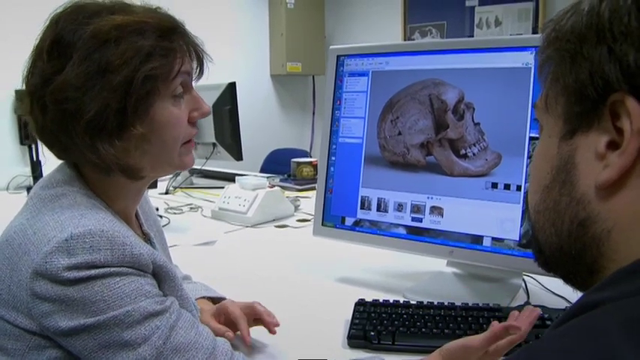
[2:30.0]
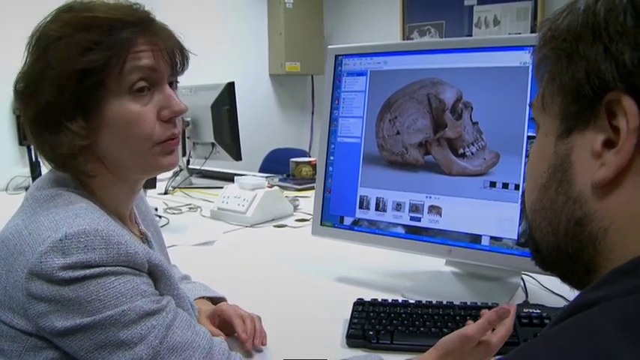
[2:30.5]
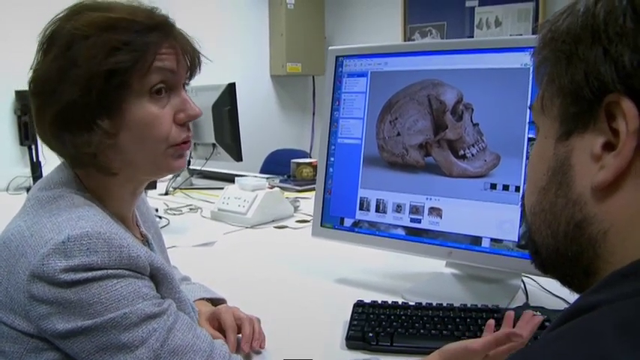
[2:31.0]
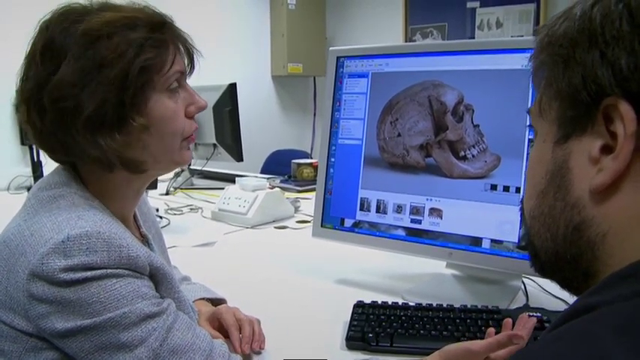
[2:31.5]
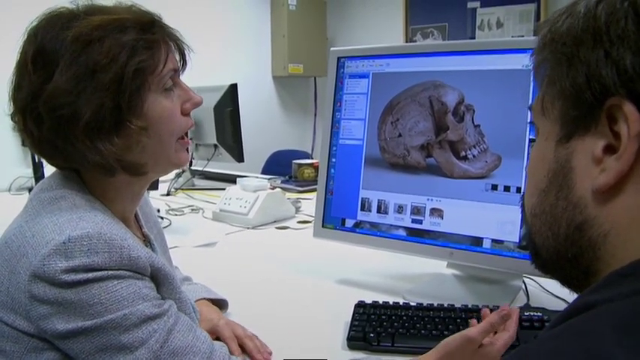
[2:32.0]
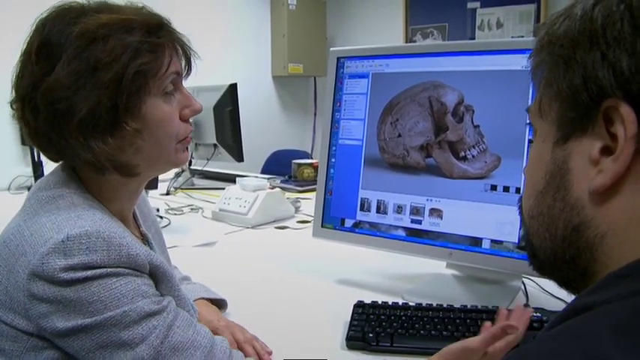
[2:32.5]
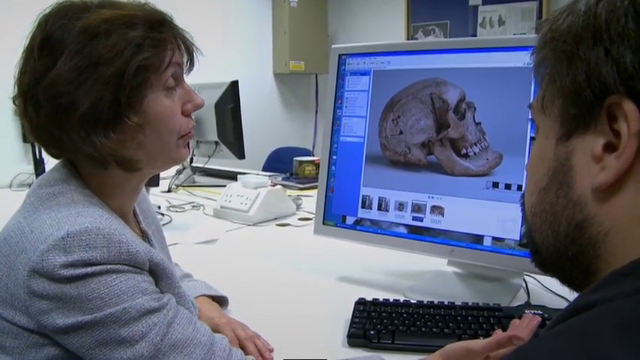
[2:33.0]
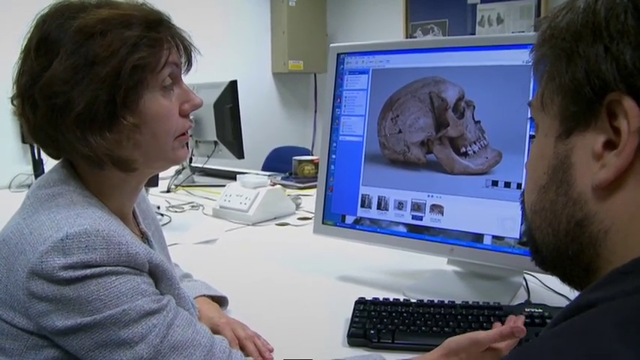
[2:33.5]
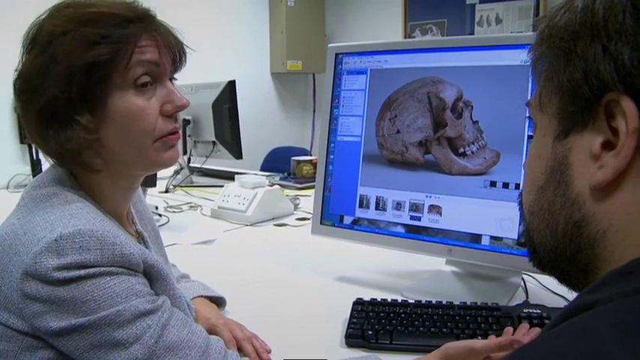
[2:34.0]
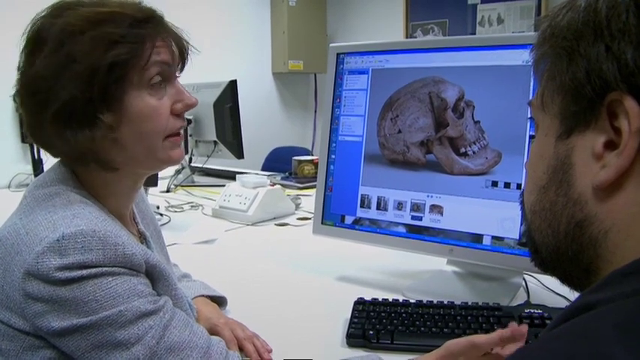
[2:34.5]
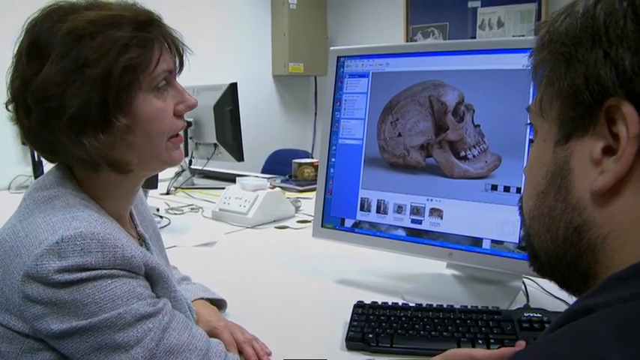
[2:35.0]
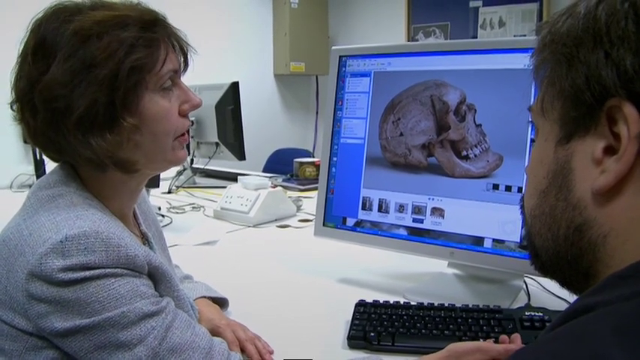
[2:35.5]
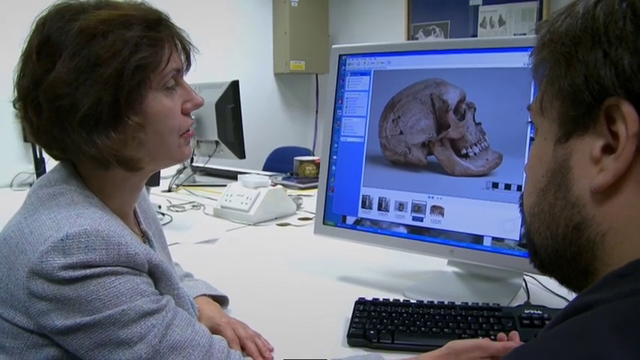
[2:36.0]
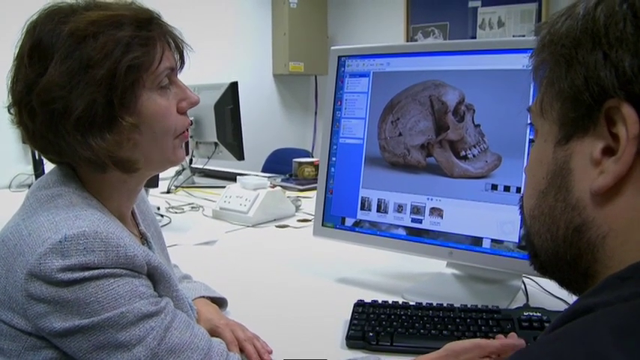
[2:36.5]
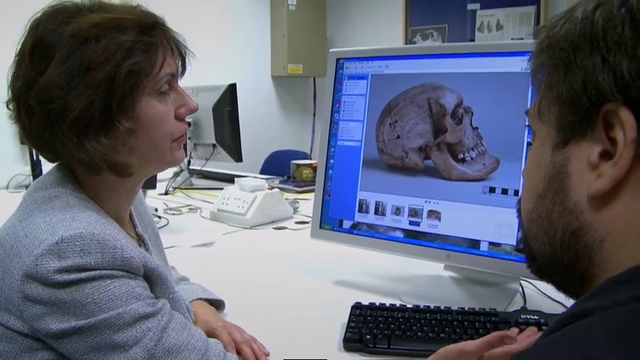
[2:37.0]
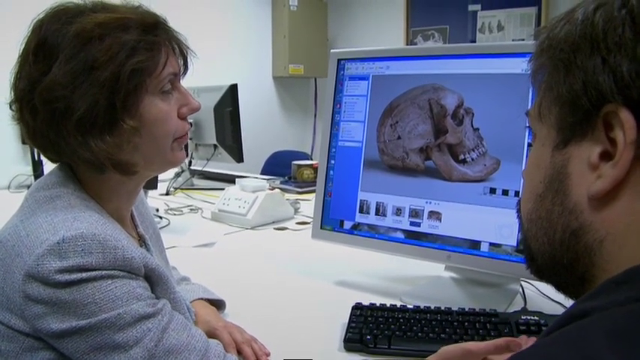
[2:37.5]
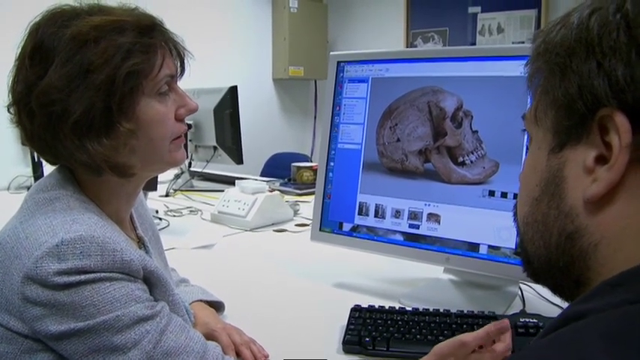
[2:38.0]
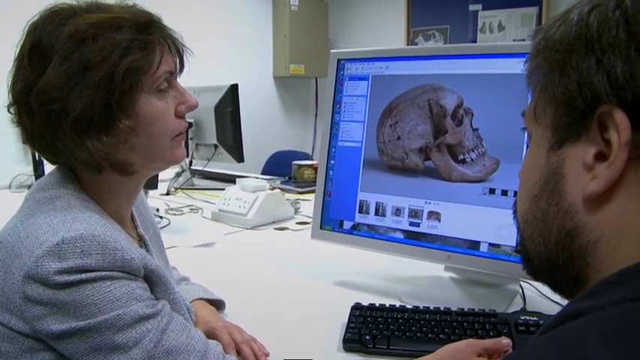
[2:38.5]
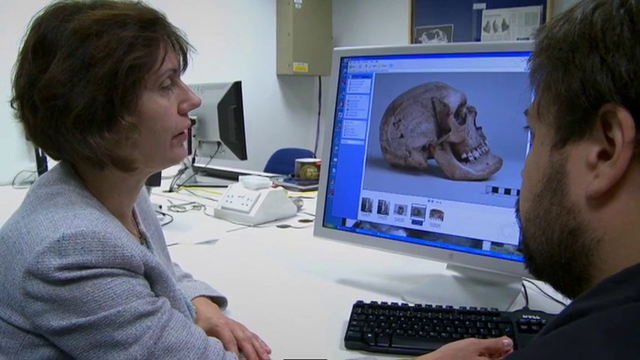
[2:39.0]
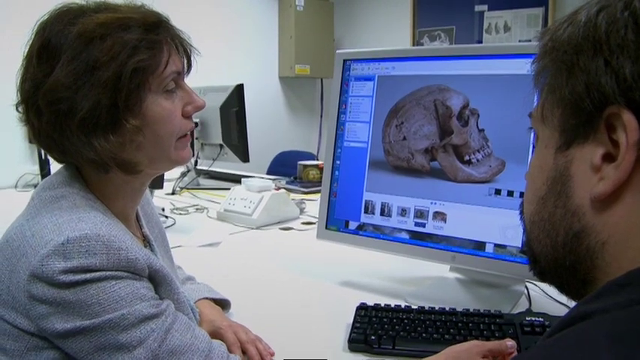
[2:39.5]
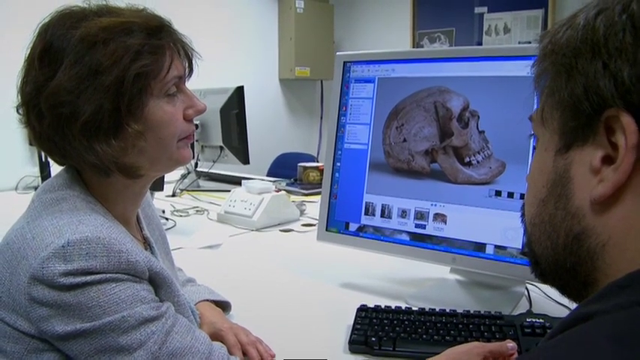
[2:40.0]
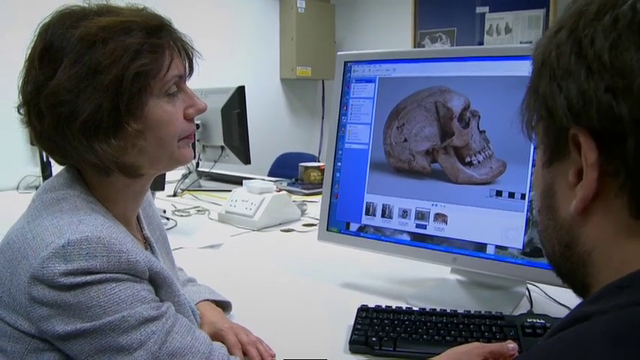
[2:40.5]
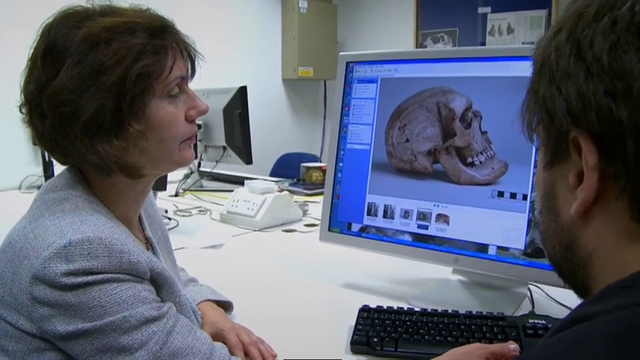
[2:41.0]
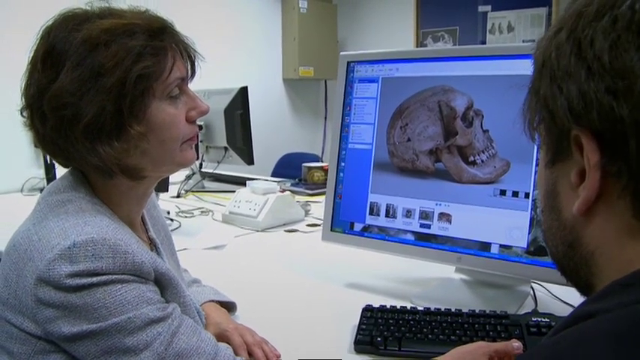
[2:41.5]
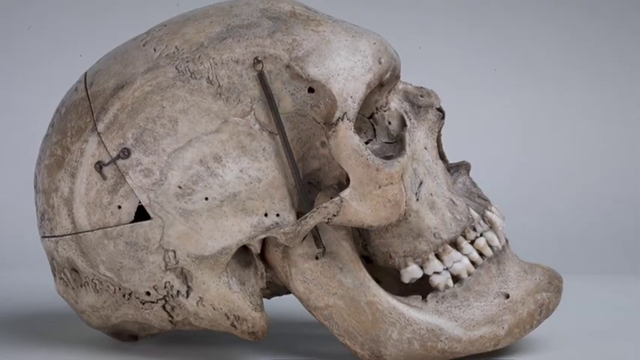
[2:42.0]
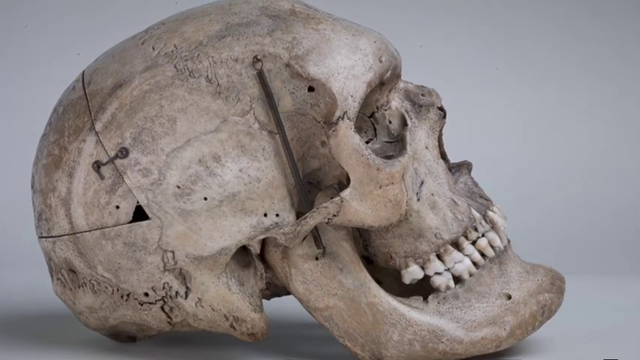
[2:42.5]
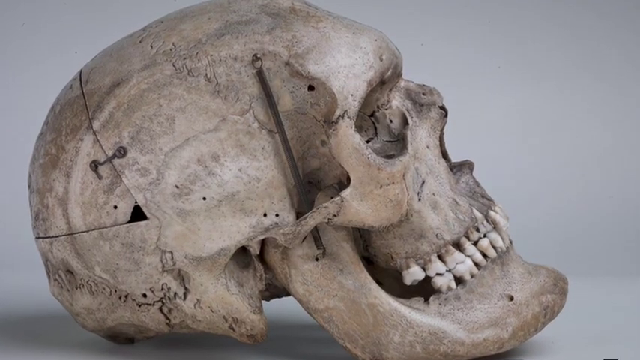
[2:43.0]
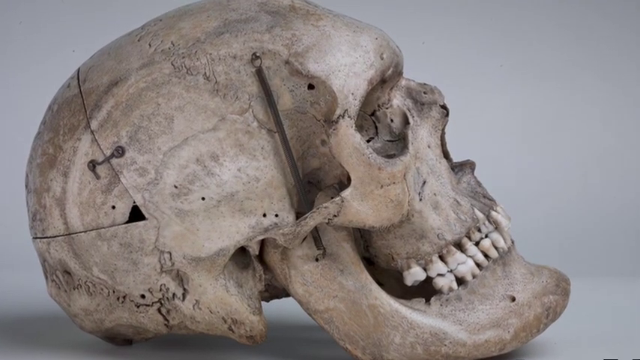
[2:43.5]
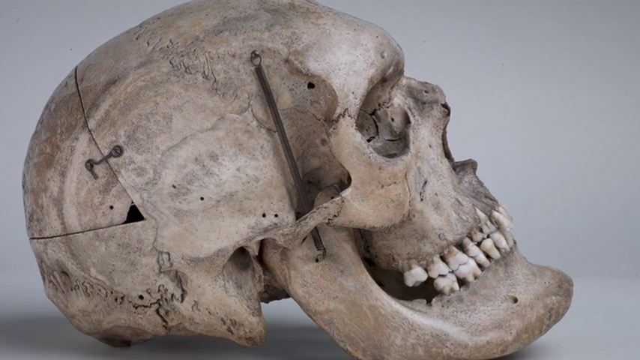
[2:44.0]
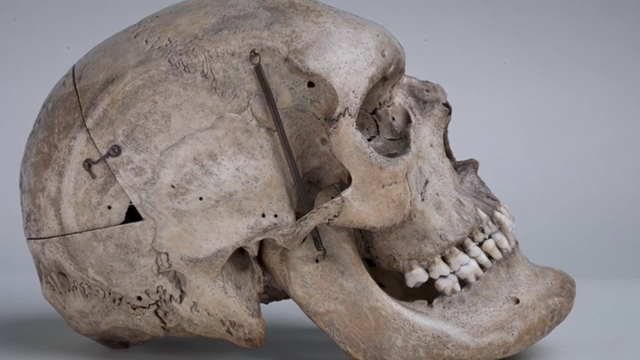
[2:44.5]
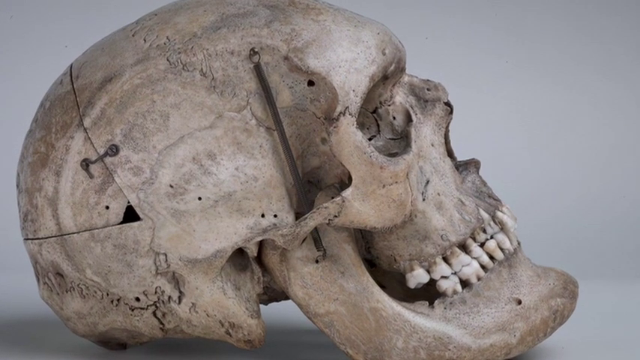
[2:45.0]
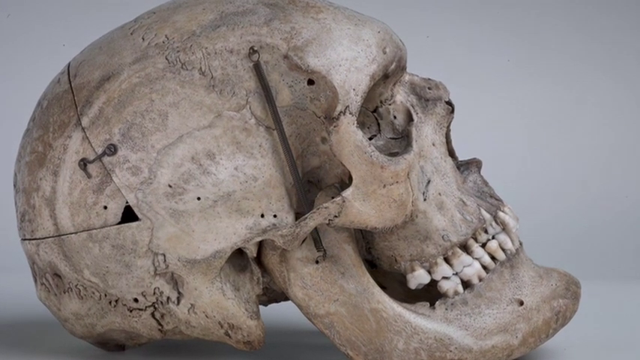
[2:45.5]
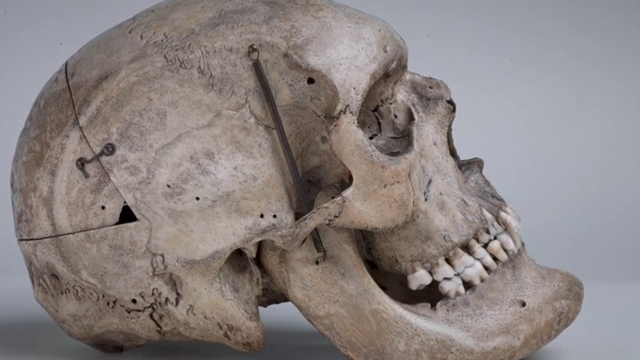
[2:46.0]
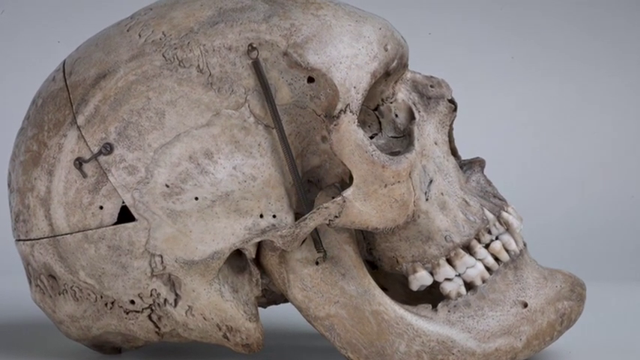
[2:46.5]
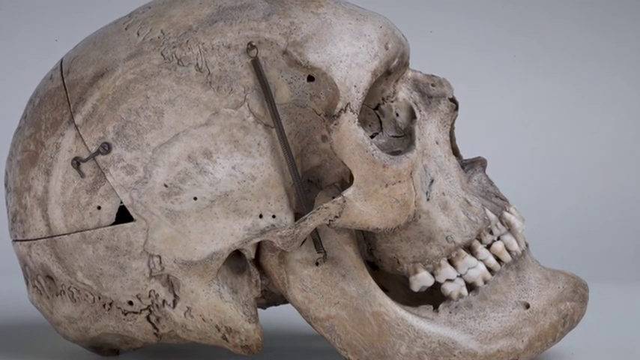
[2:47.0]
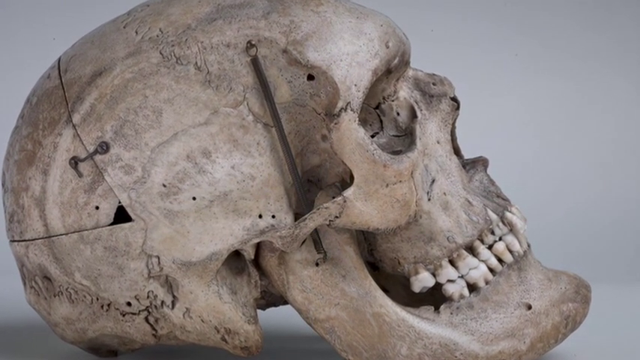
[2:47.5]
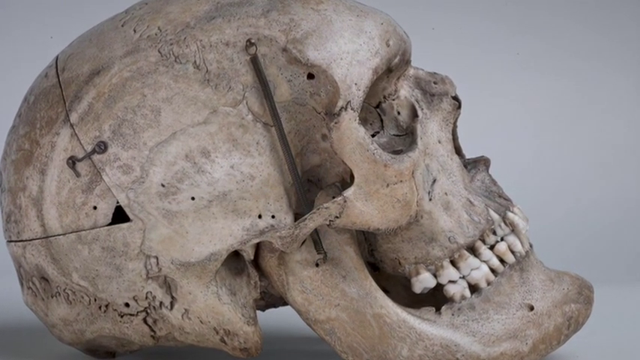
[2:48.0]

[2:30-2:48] A side view shows the woman and part of the man's head as she continues to talk about the side view of the skull on the computer screen. She looks at the skull while the man looks at her the entire time. The view zooms in on the skull on the computer screen, where there appear to be something almost like pins in the head near the temple and by the jawline, with what almost looks like a very thin spring connecting them. There is also something like a screw and what appears to be a hook that locks the back part of the head together. The digital close-up of the skull is on a gray background, and the teeth on the skull are visible.